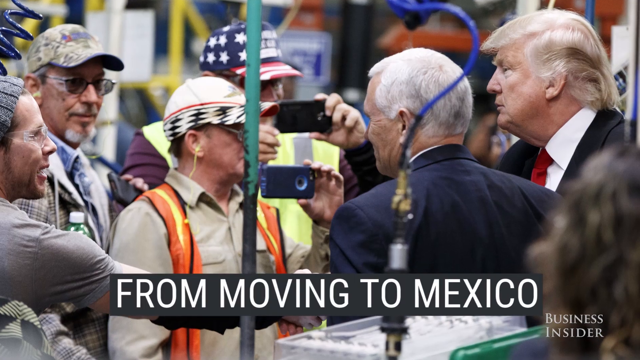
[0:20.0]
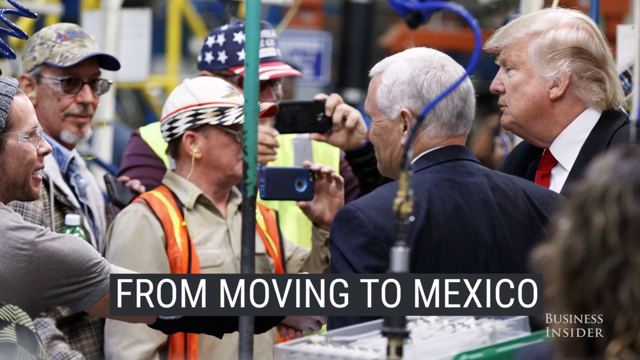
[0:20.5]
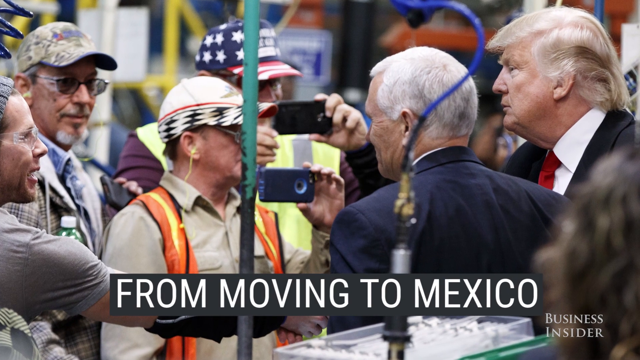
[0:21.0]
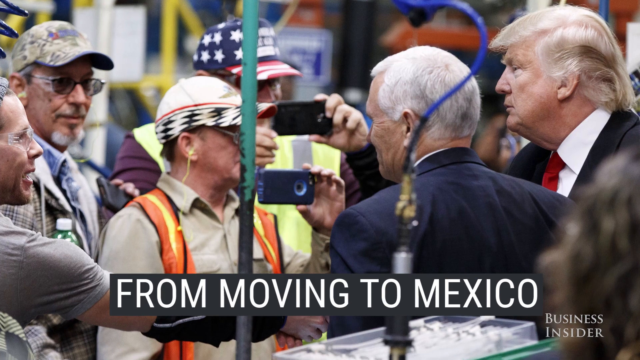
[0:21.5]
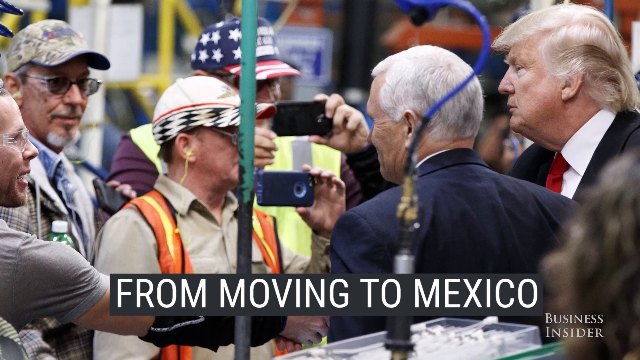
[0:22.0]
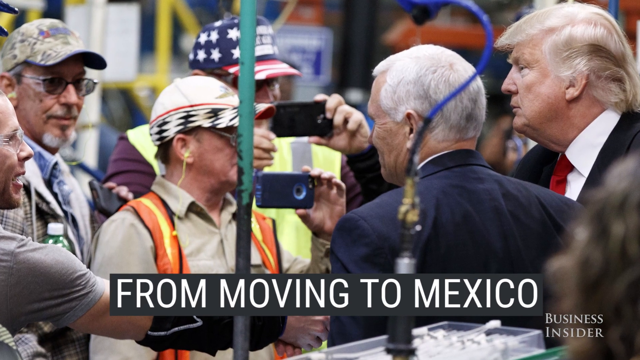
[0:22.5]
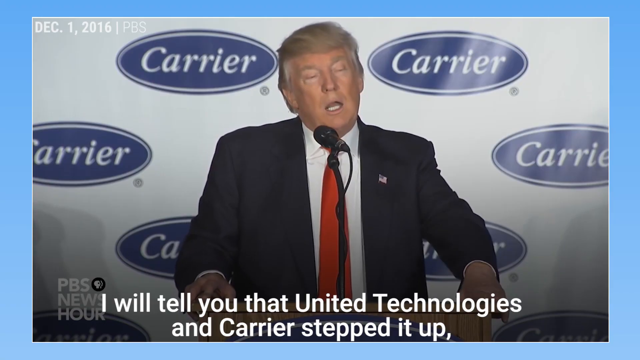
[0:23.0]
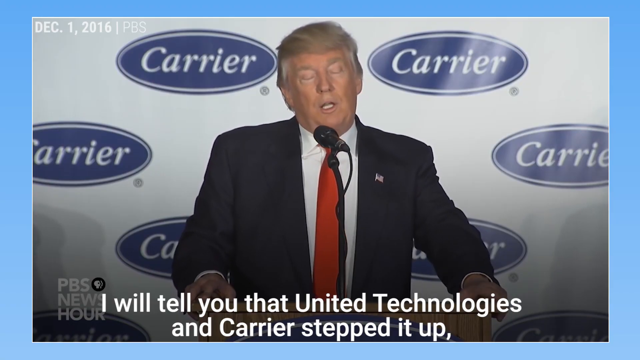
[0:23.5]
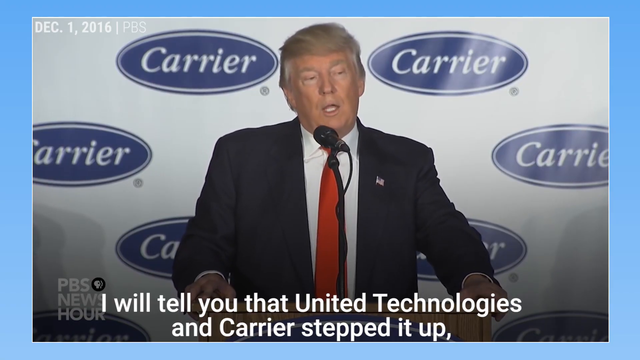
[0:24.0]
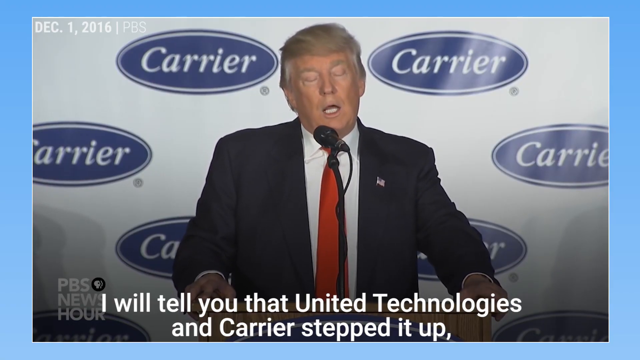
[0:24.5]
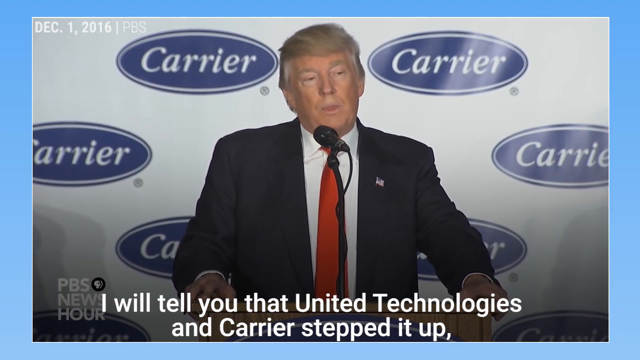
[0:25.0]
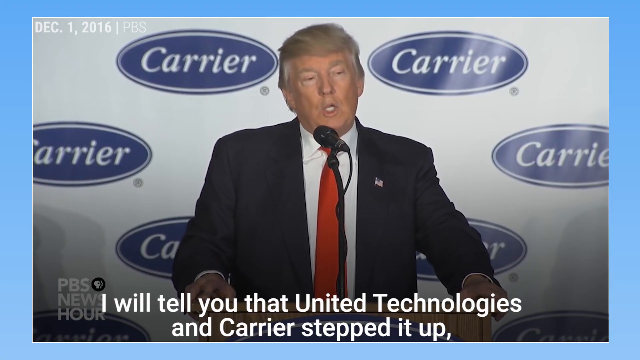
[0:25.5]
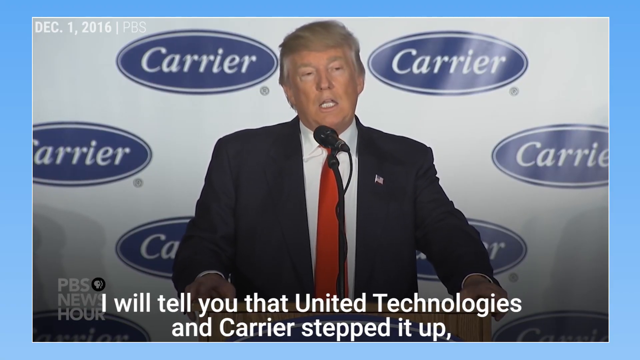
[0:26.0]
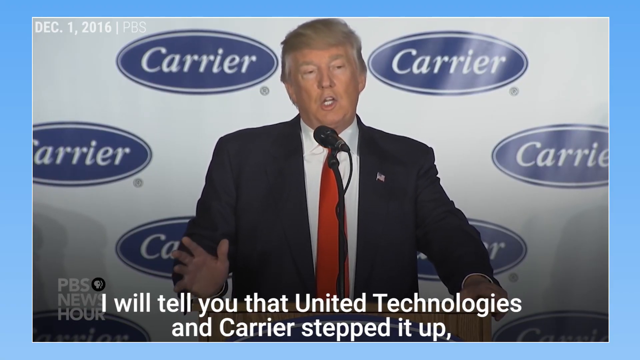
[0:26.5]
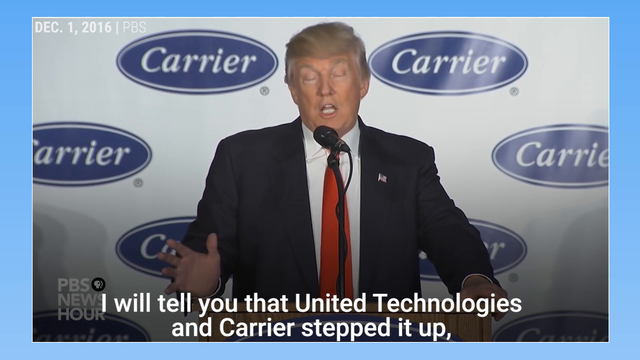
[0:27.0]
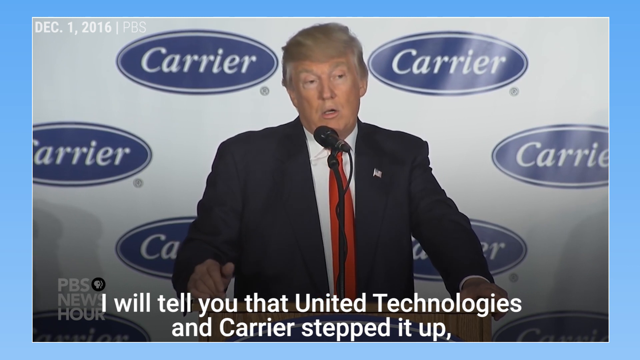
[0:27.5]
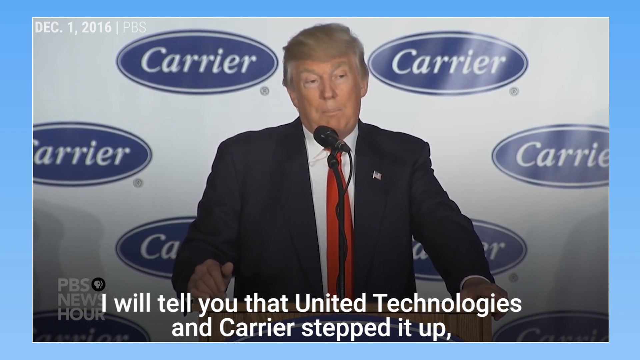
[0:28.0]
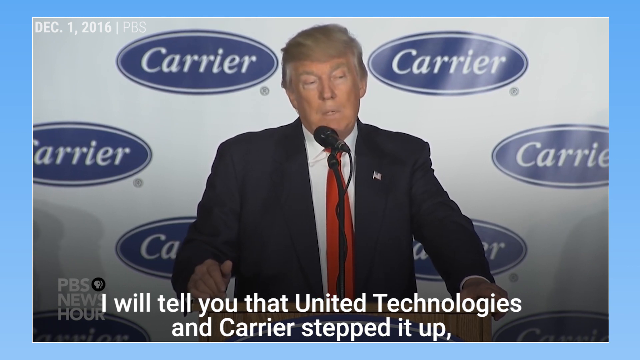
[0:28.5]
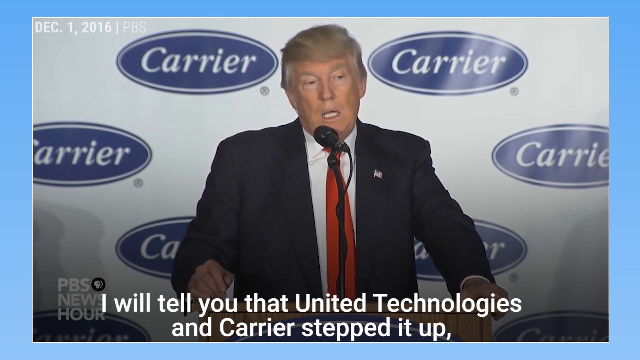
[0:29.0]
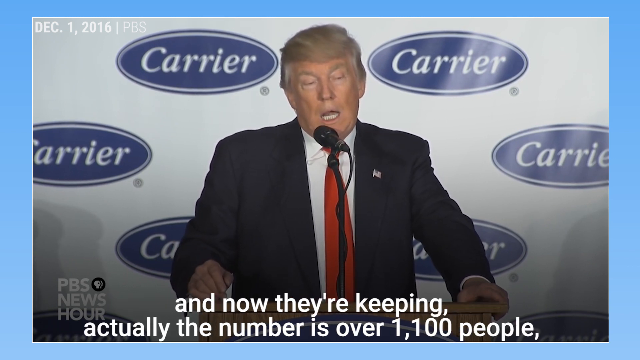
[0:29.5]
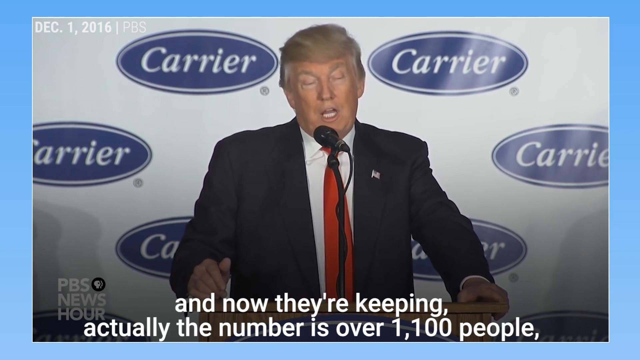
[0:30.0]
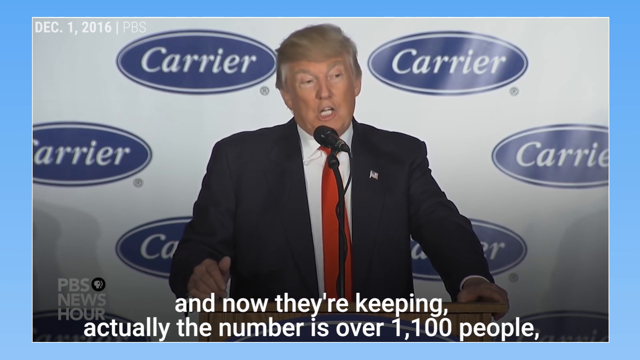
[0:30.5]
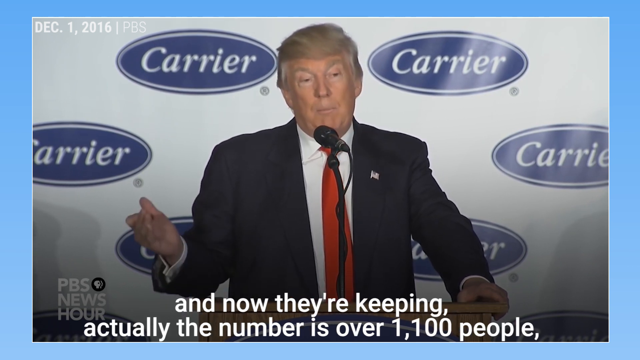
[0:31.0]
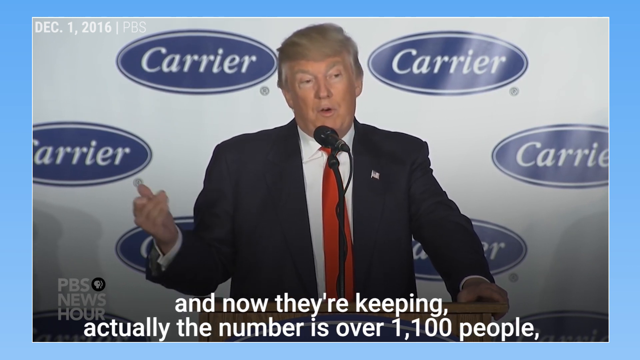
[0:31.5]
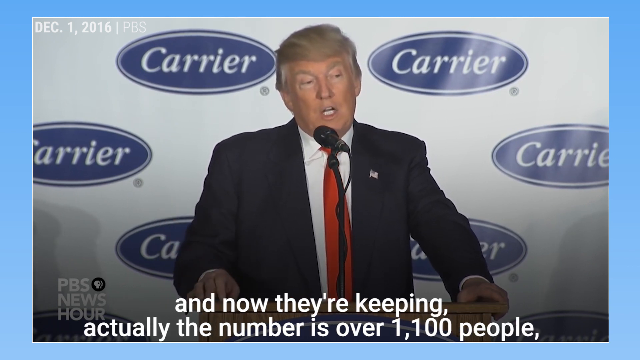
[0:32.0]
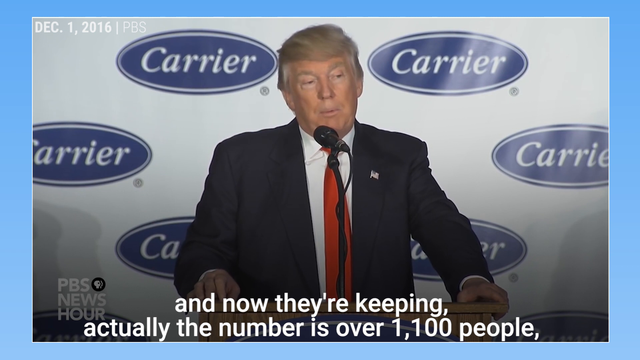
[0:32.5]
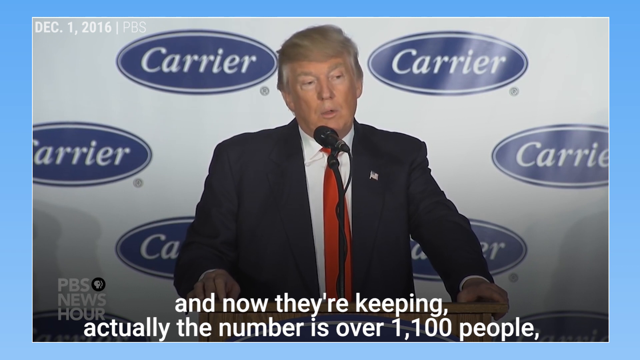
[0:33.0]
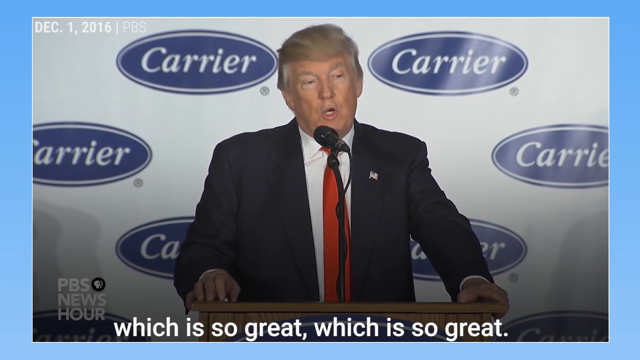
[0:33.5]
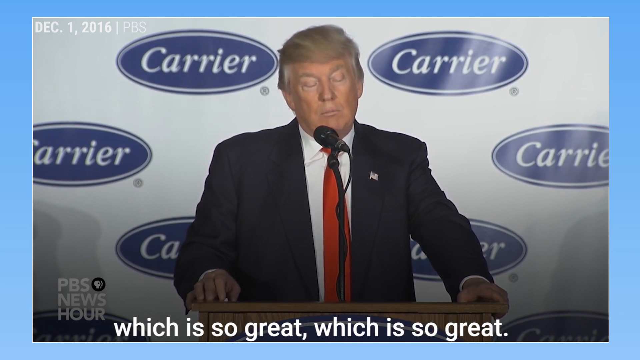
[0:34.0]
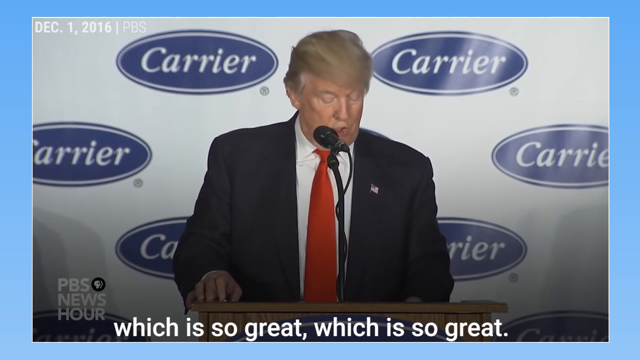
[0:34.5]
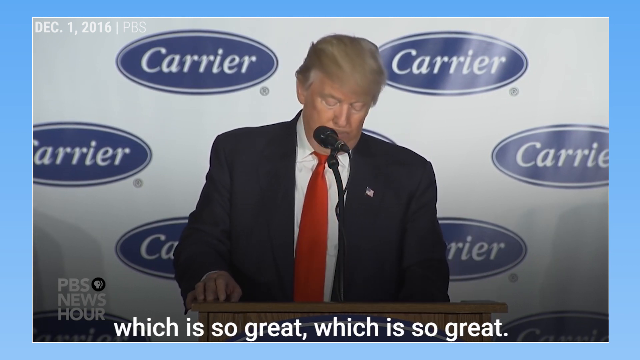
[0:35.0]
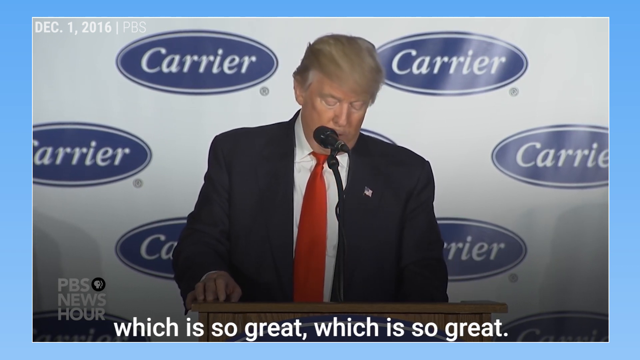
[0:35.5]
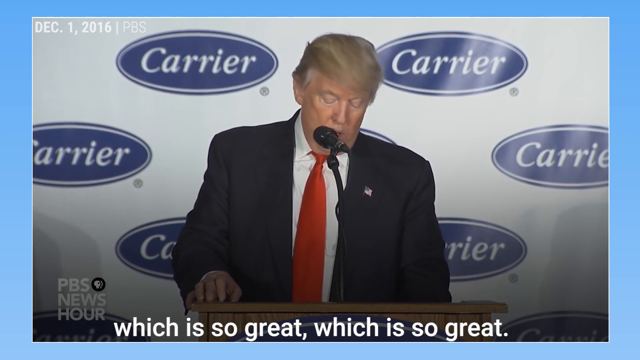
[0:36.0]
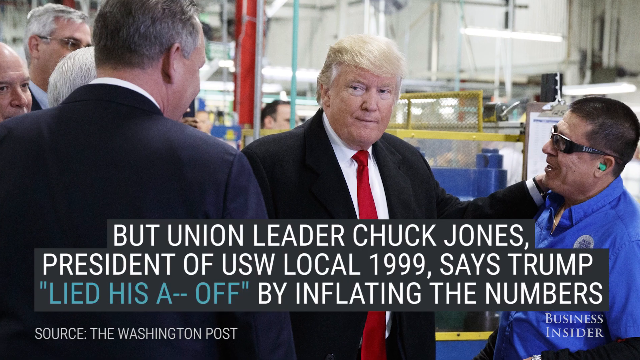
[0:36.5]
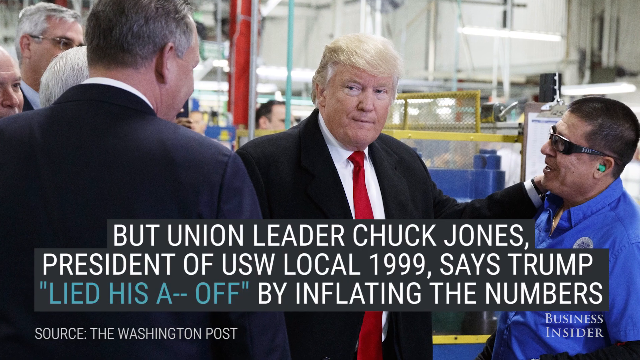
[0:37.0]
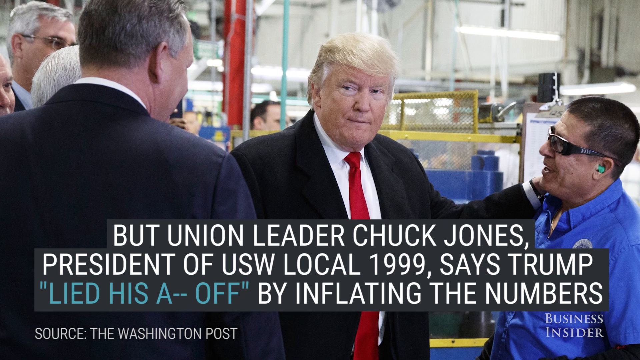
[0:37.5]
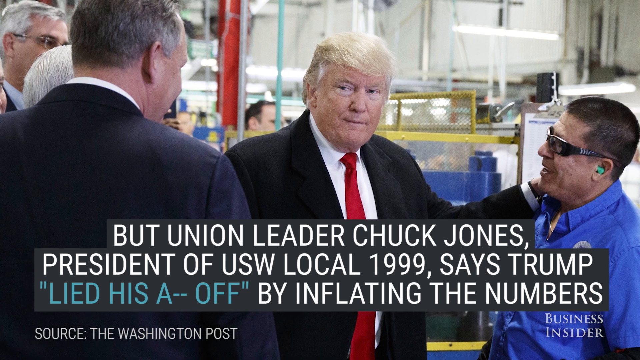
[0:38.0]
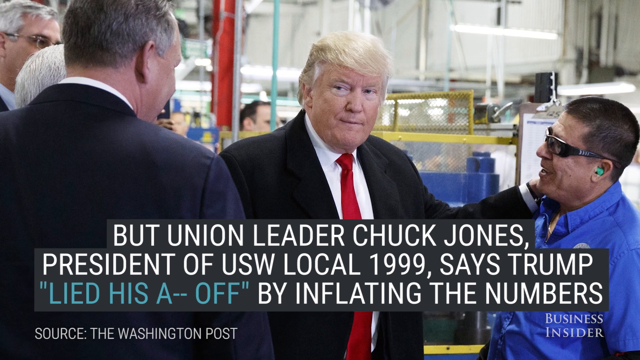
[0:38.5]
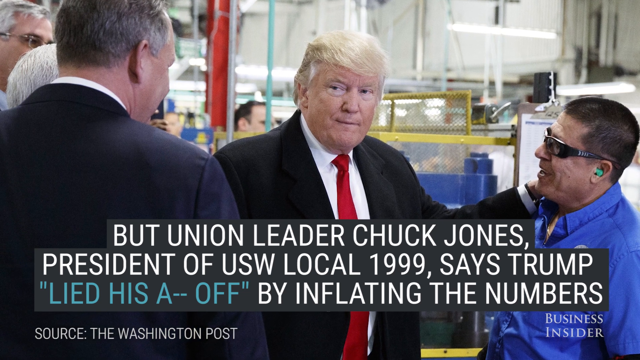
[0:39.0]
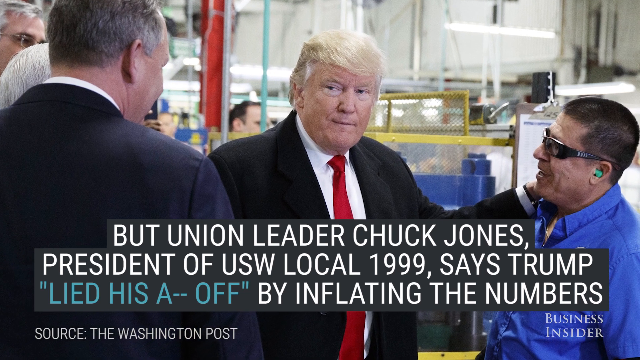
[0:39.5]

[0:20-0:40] A transition shows President Donald Trump standing at a podium with a microphone in his face. He wears what appears to be a black business suit, a white collared shirt and a red tie. The background appears to show Carrier on an oval-shaped dark blue background. Text at the top left reads "video insider," and text at the bottom reads "Trump attacks union leader over carrier deal." Another transition shows what appears to be Mike Pence and Donald Trump, followed by staff and other individuals from Carrier. Trump gives a thumbs up, and Vice President Mike Pence, on the far left, wears a black business suit, a white collared long-sleeve shirt and a white, red and blue striped tie. The two stand next to each other; Pence is a Caucasian man with white hair. White text at the bottom reads "Trump has been toting a deal he and VP elect Mike Pence made."